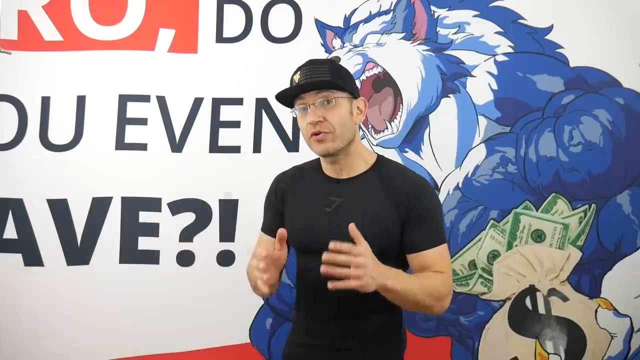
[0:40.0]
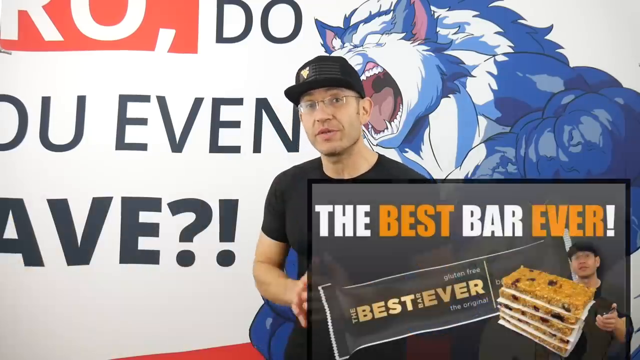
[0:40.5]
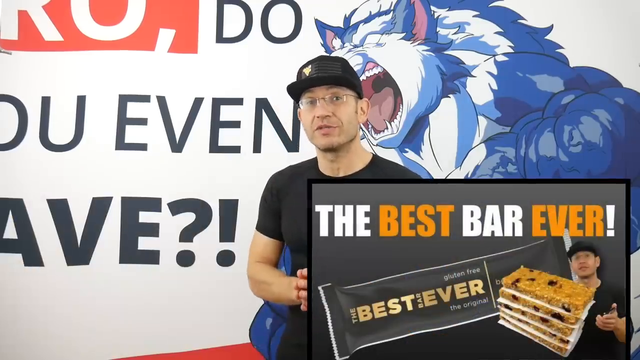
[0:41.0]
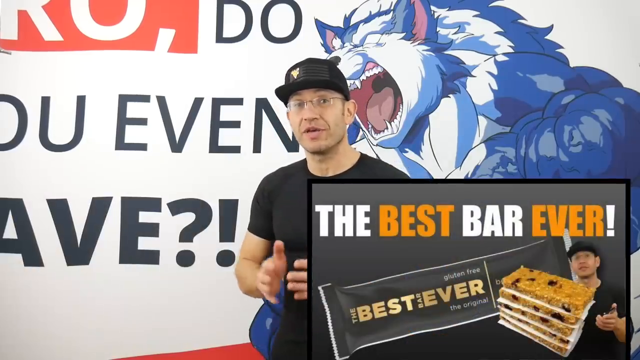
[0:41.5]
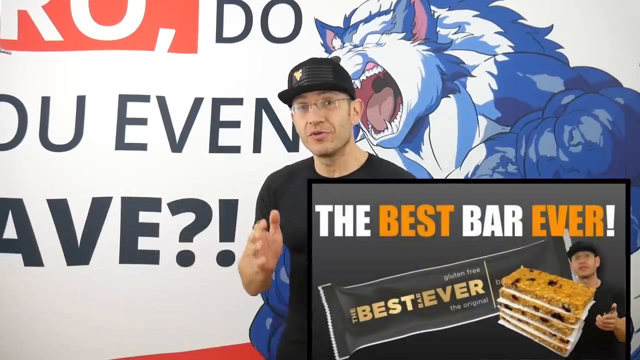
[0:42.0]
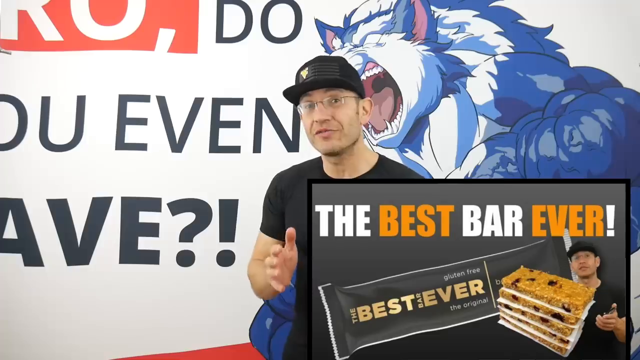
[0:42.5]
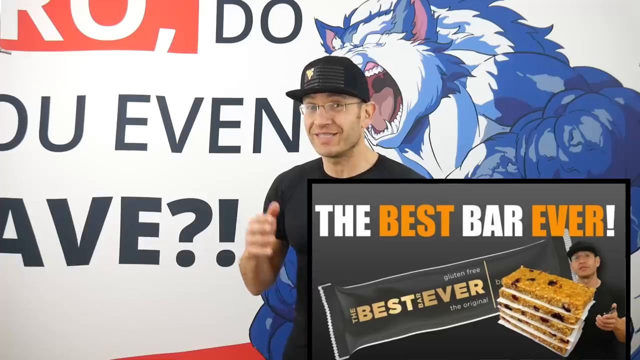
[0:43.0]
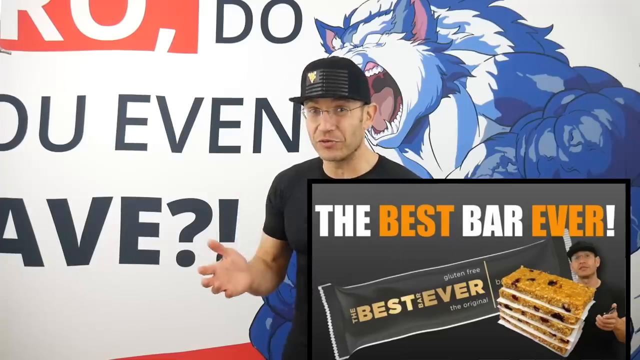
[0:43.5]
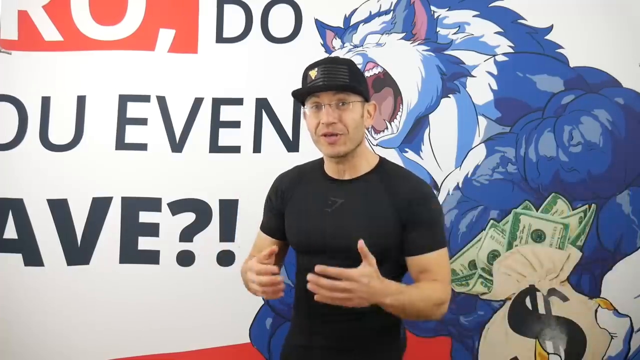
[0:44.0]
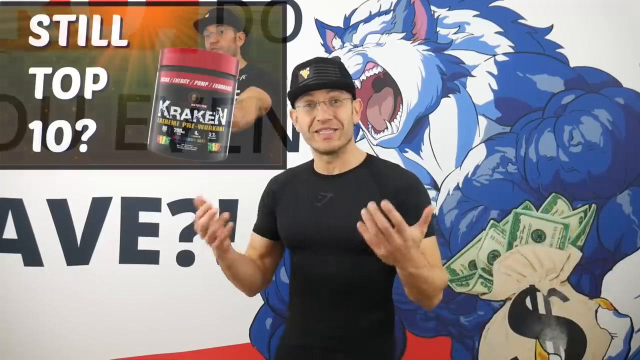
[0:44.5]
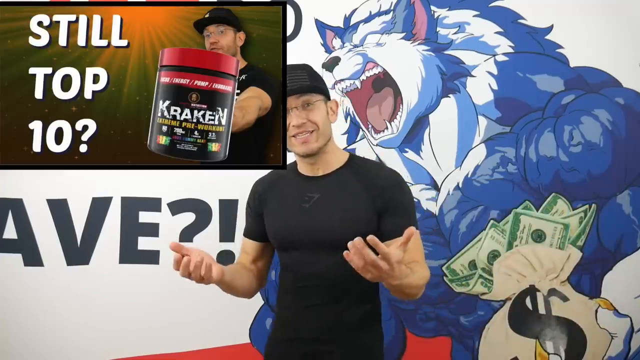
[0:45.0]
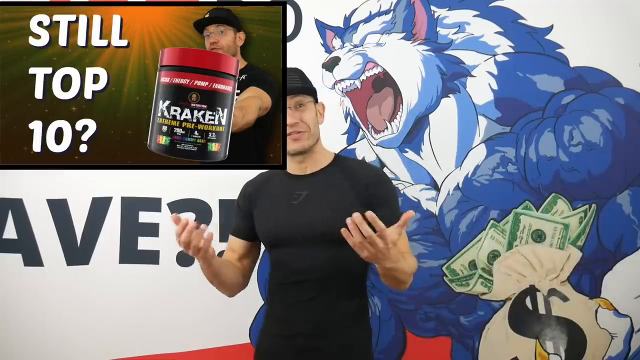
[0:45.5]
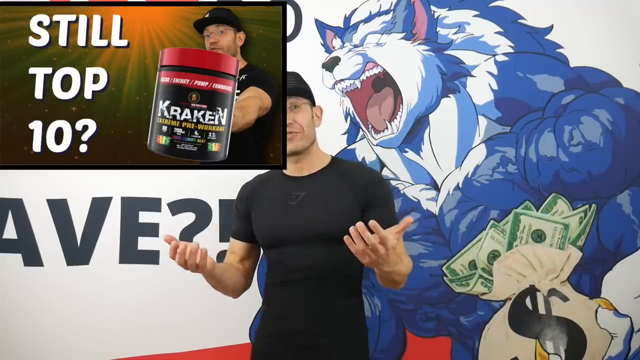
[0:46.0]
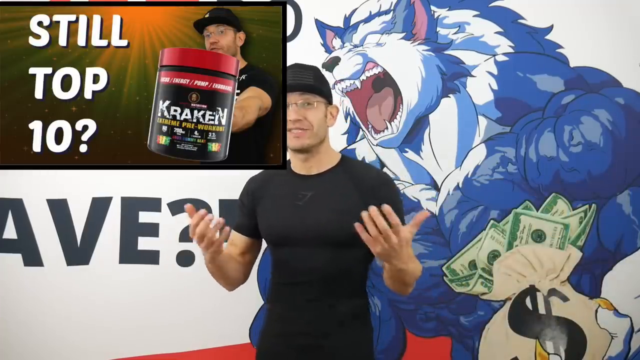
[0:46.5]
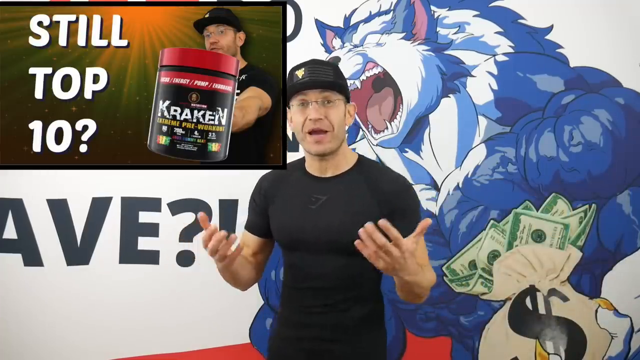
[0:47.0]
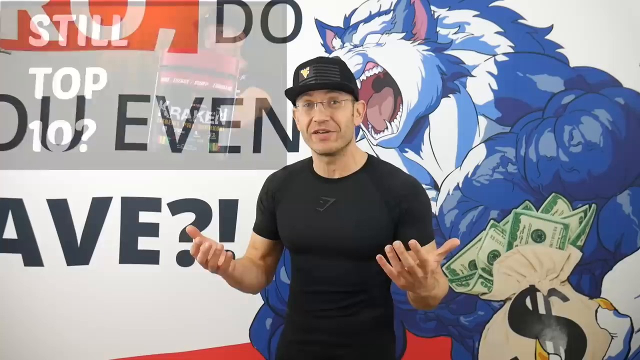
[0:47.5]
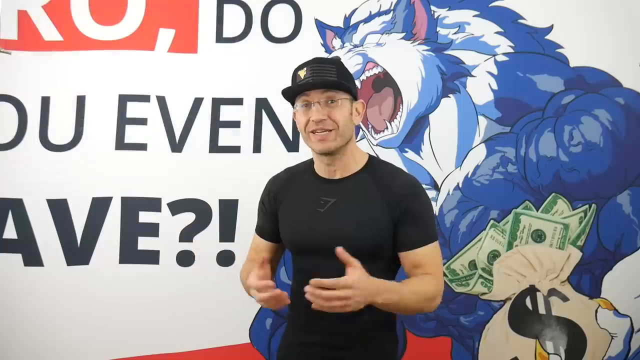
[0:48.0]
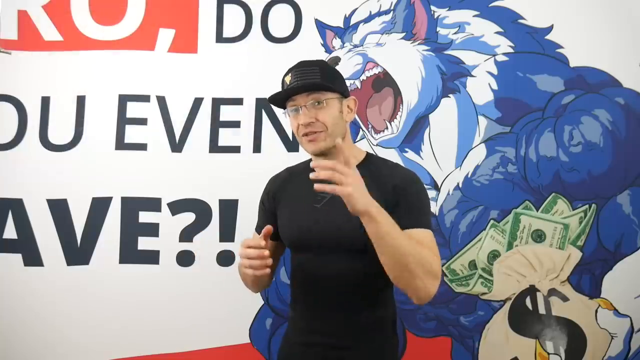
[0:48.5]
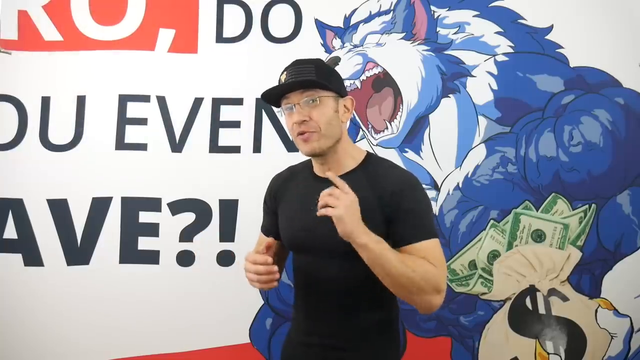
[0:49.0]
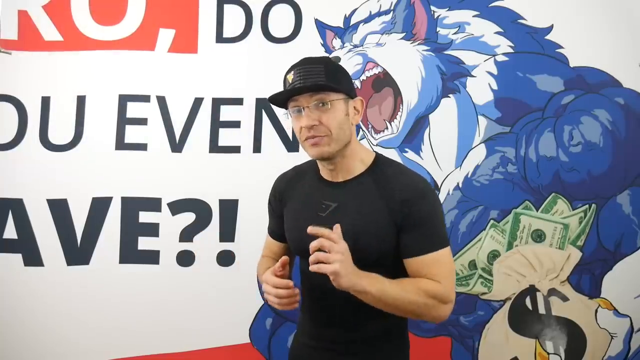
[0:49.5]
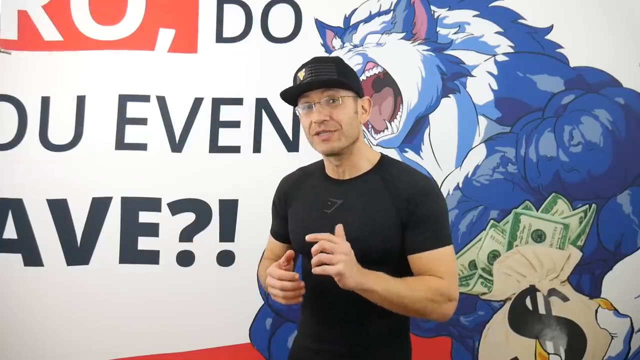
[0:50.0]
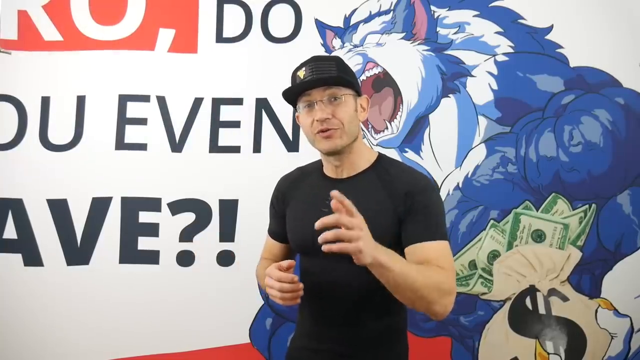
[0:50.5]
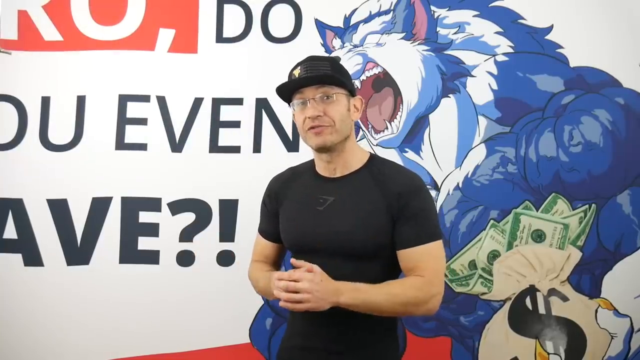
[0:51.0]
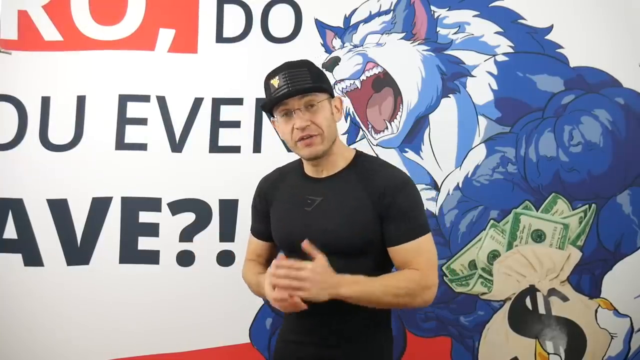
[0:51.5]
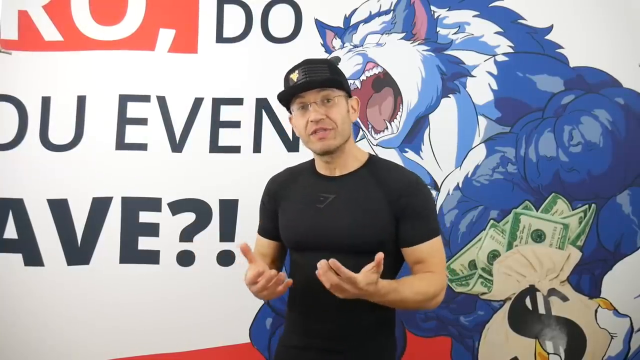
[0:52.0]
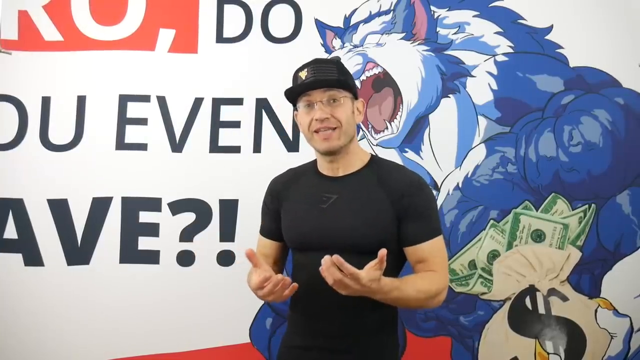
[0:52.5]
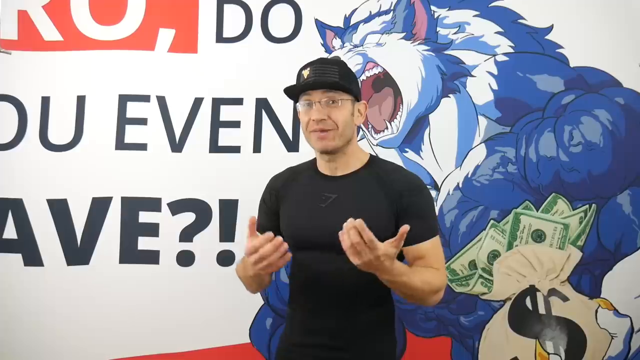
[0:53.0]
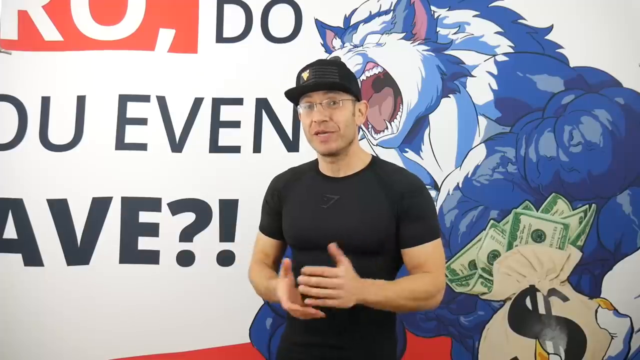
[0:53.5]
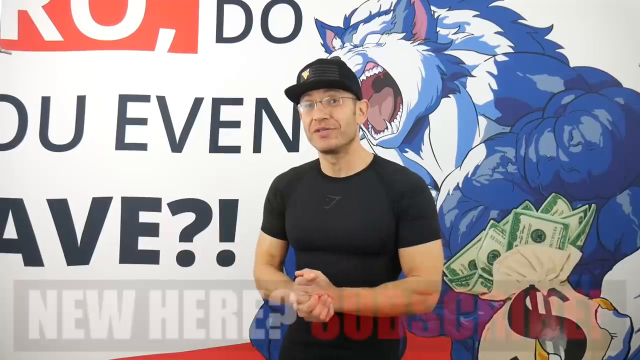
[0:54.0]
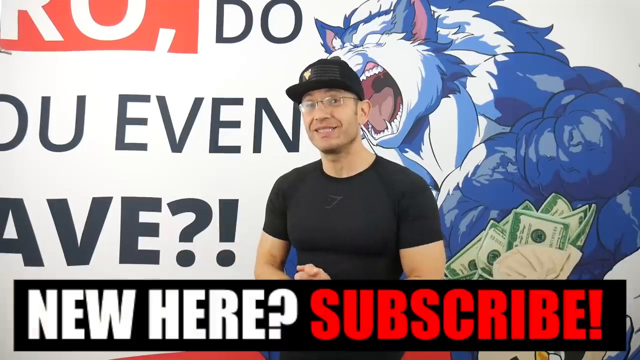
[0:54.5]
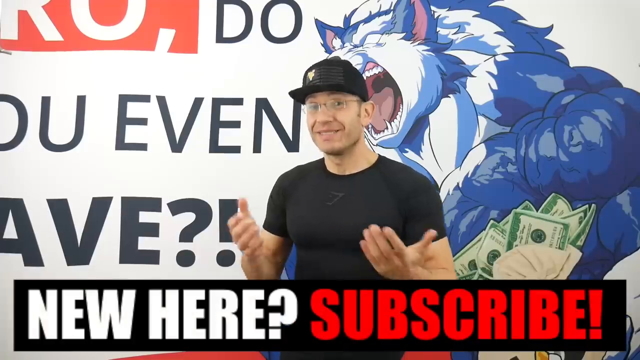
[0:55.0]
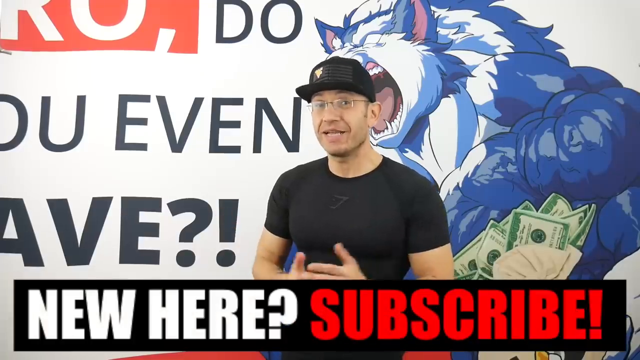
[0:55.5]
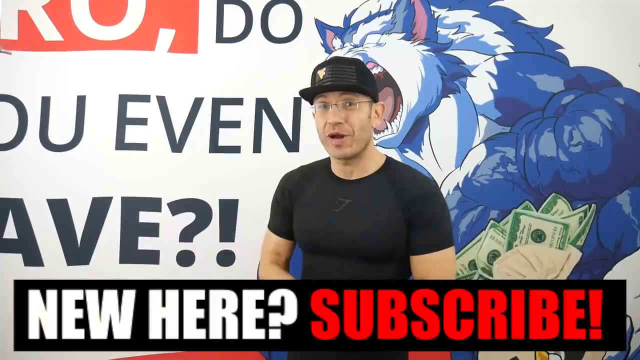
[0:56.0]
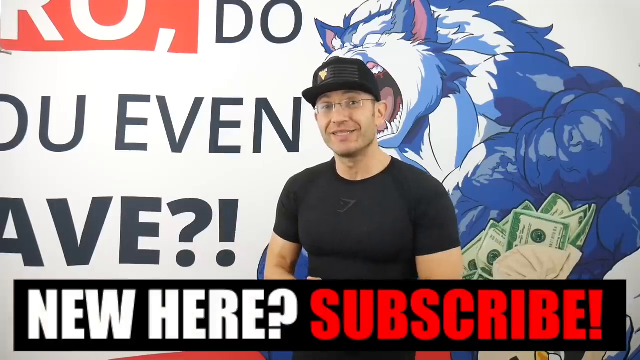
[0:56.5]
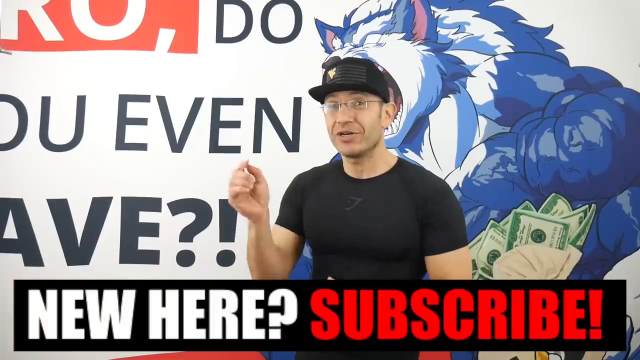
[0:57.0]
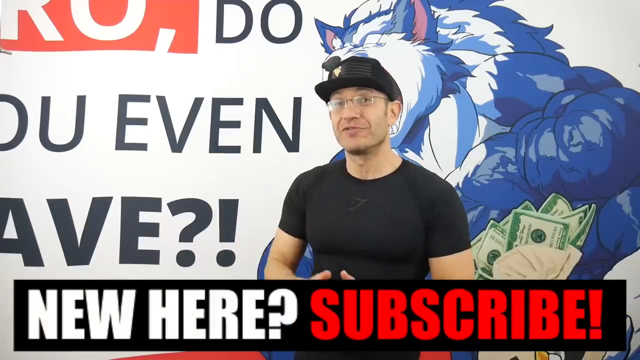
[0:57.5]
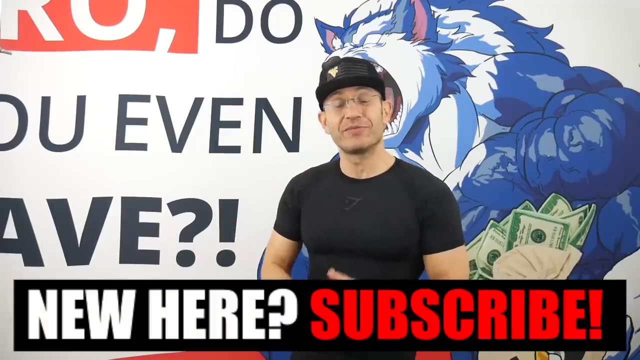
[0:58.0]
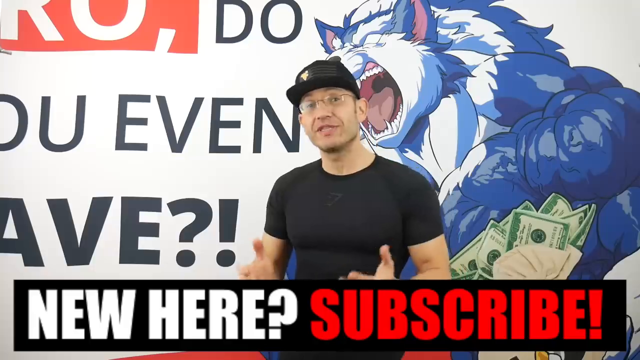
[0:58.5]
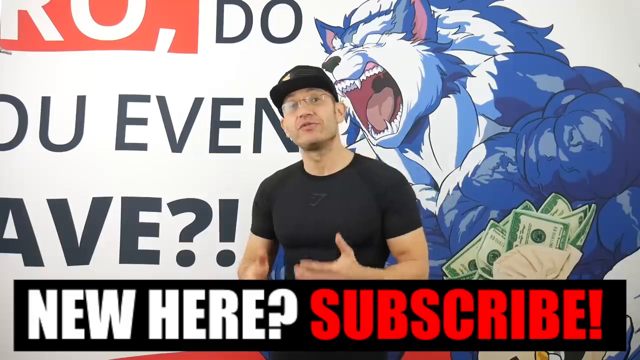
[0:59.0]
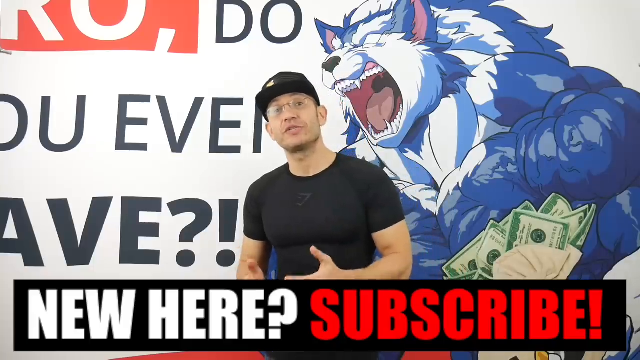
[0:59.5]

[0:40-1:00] A man in a short-sleeved black shirt and a black hat speaks to the camera, gesturing animatedly with his hands. He stands in front of a backdrop with writing on the left side, most of the words cut off, and on the right side what looks like a graphic of a very muscular humanoid wolf character, growling, blue and white, holding a bag of money in one of his hands. As the man keeps speaking, photo boxes appear showing him in other scenes. One says "The Best Bar Ever!" and shows him standing behind a stack of what look like granola bars. It disappears, and another reads "Still Top Ten?" and shows him holding up a jar that says "Kraken," which looks like protein powder or a supplement. These disappear, and the man continues speaking, pointing at the screen and gesturing with his hands. Toward the end, a bar appears at the bottom of the screen that says "New Here? Subscribe."